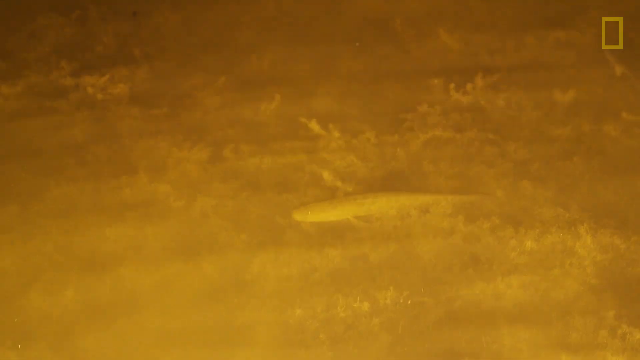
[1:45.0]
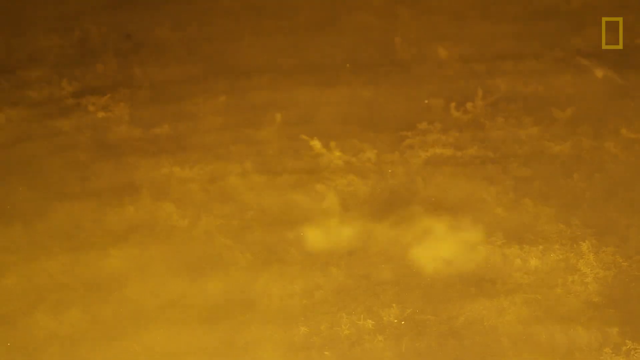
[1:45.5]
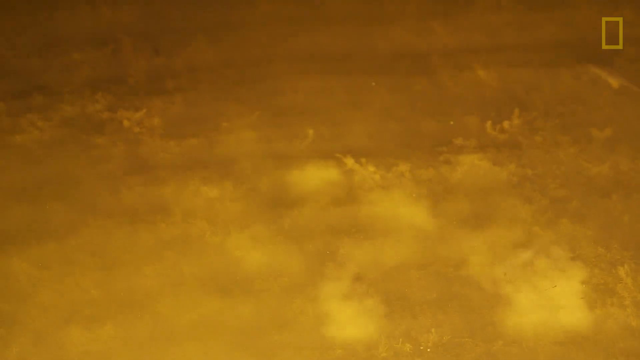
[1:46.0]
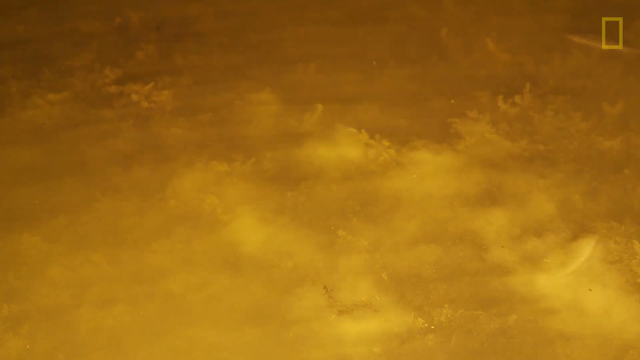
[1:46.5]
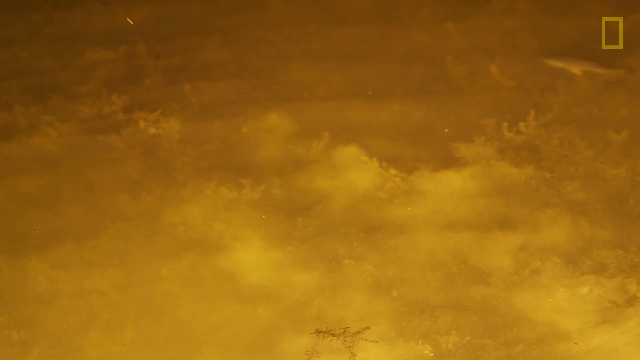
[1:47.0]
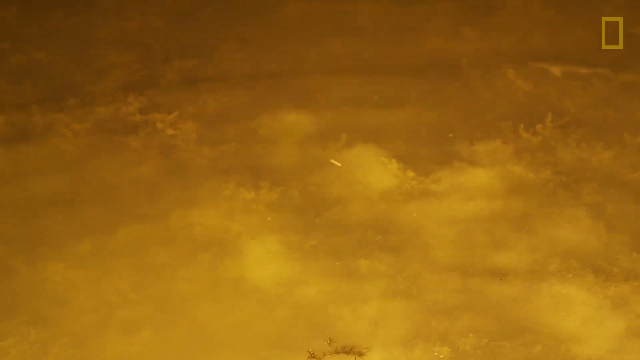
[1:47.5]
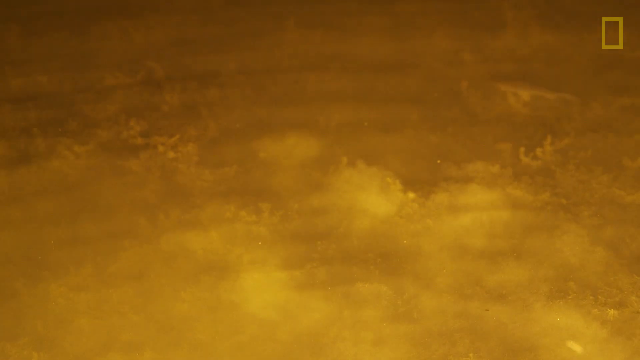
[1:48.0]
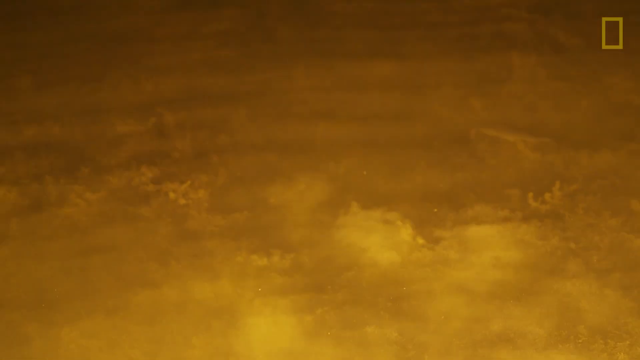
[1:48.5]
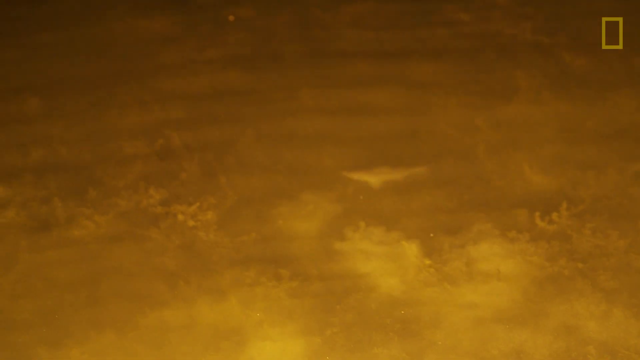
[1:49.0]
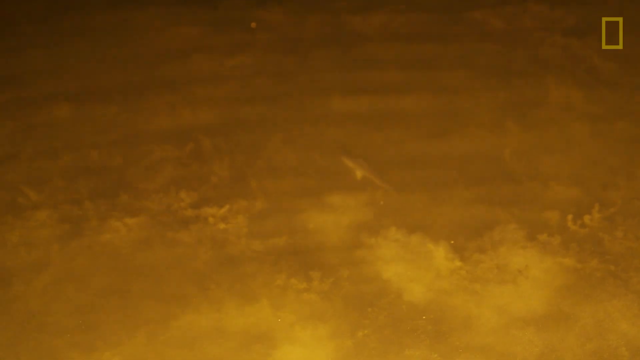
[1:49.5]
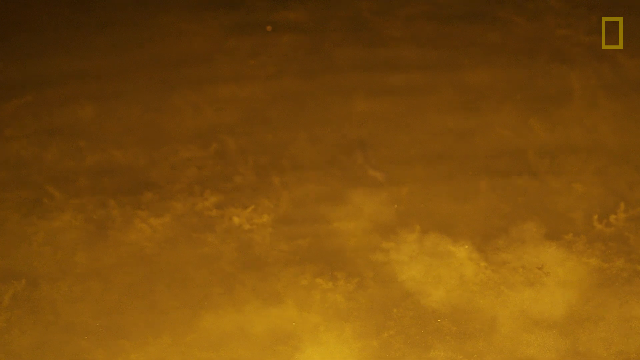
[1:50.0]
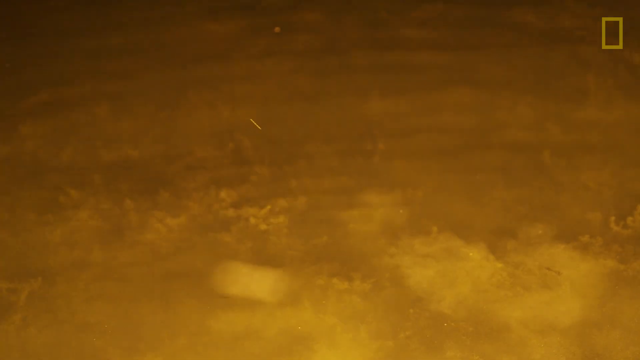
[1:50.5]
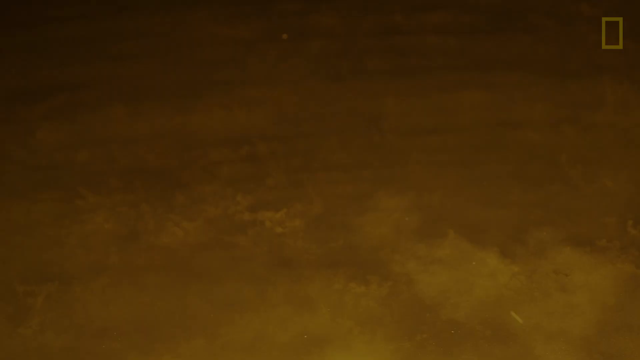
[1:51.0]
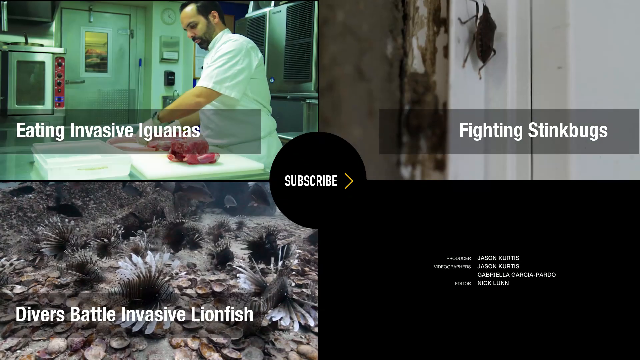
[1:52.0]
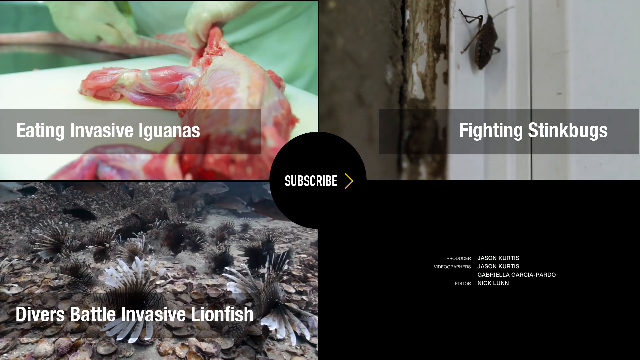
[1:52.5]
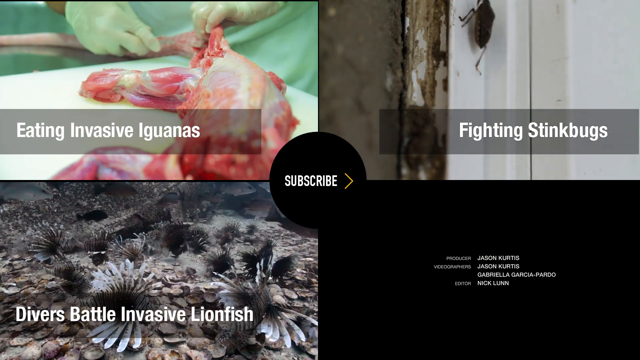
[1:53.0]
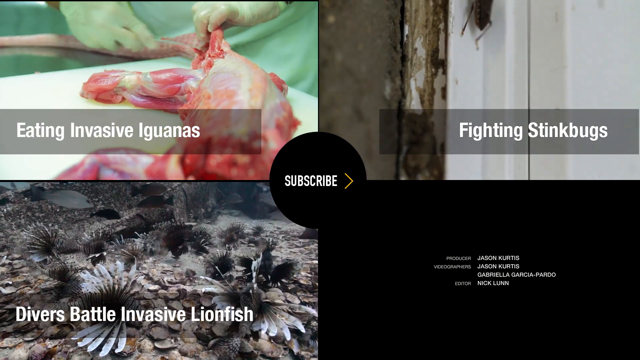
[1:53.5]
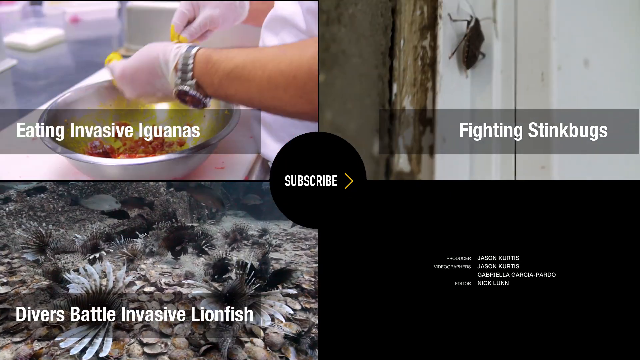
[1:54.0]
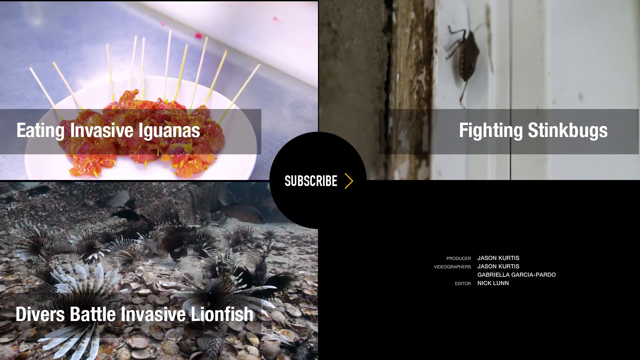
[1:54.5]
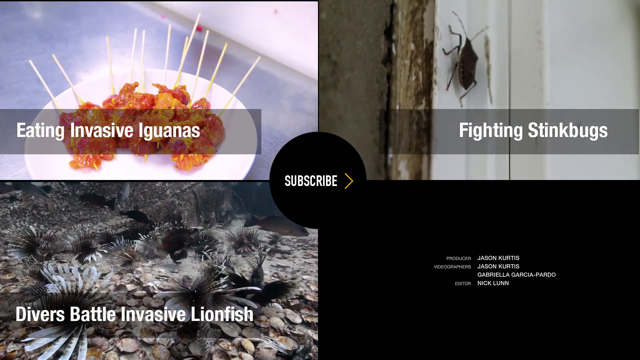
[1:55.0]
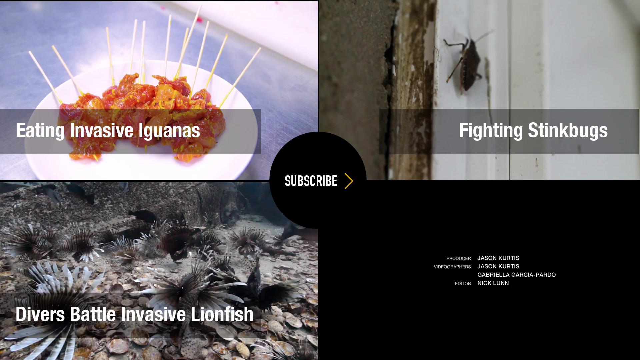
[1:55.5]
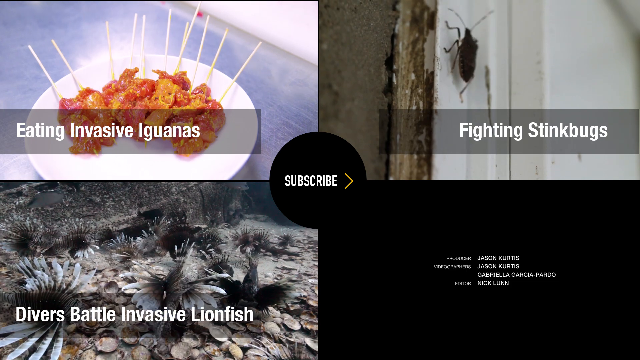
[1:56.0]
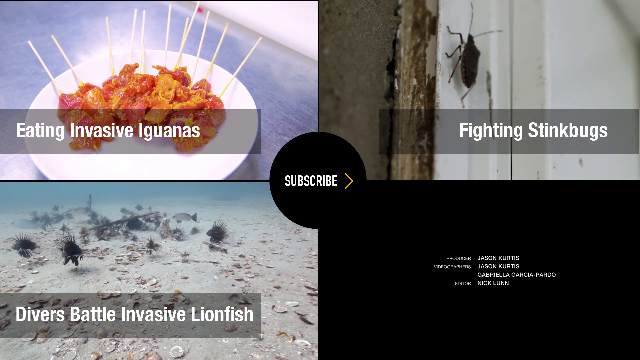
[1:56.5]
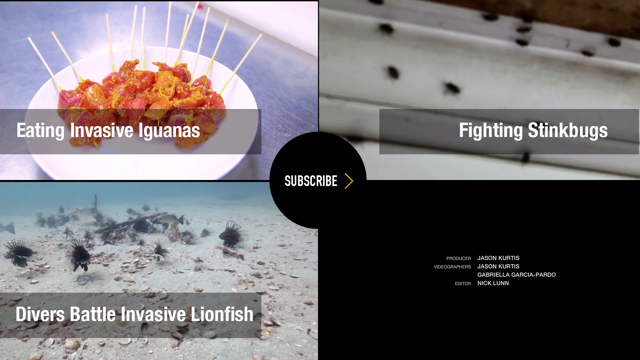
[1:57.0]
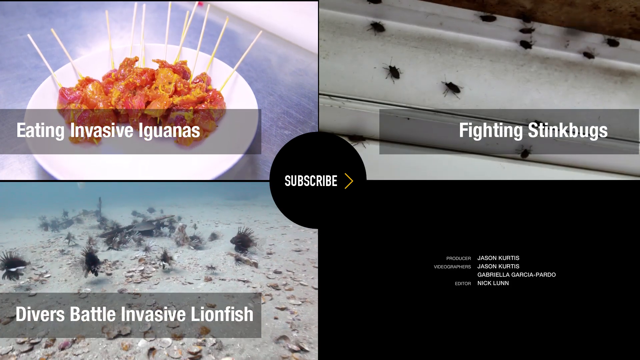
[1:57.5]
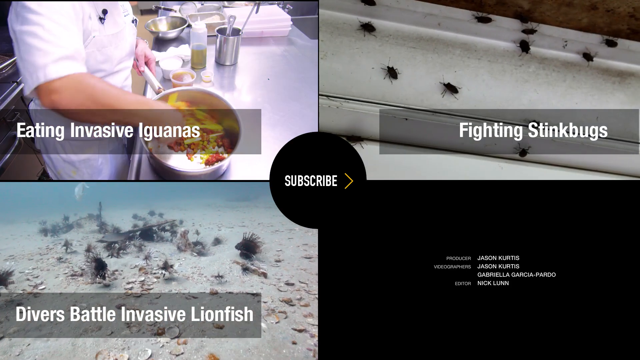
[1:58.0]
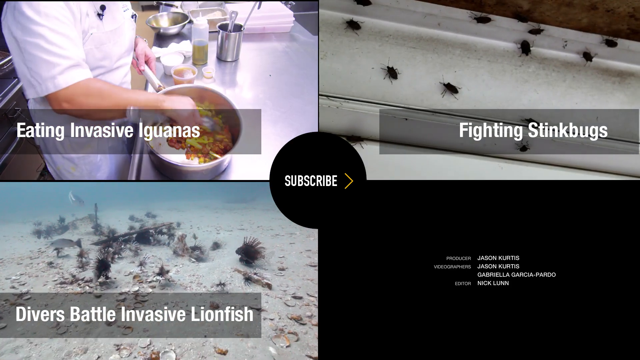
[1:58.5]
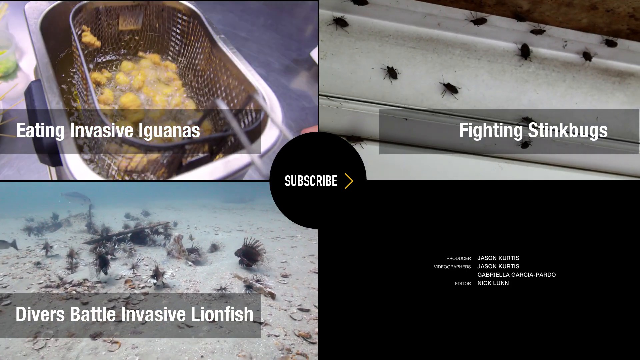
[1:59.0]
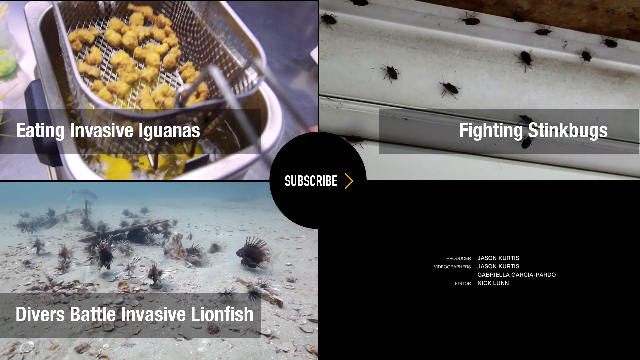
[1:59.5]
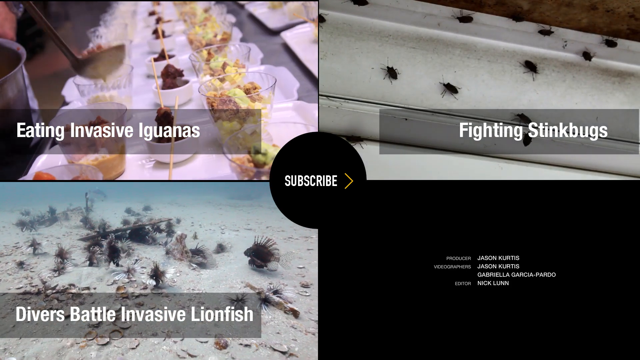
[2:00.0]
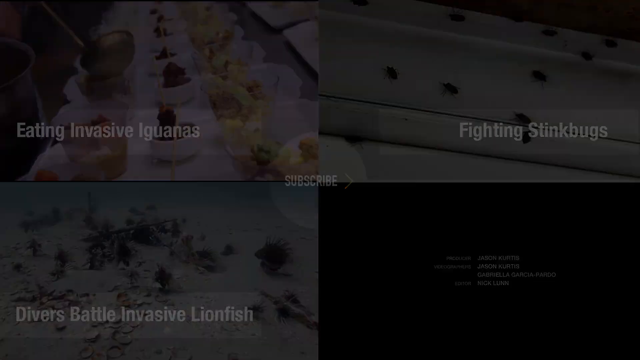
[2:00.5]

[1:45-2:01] The men are back in the water, seriously involved in capturing the fish.